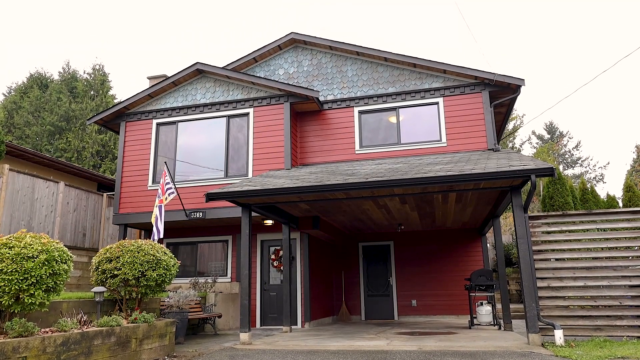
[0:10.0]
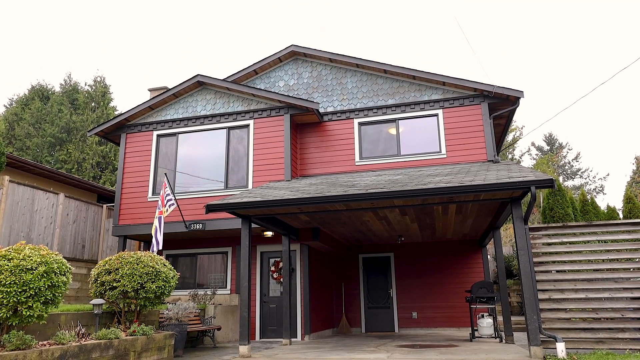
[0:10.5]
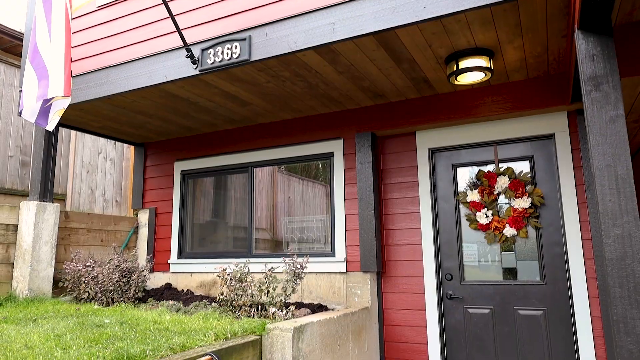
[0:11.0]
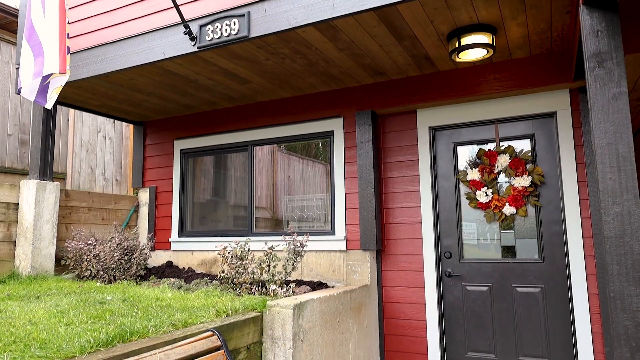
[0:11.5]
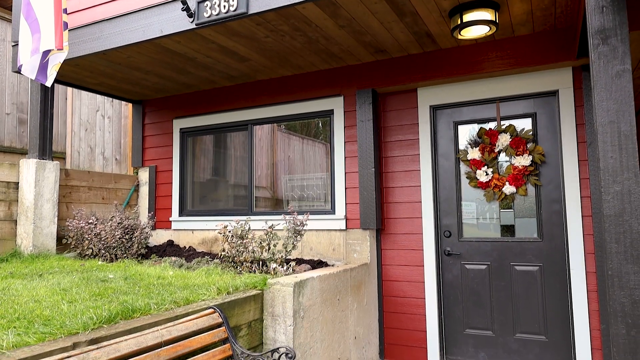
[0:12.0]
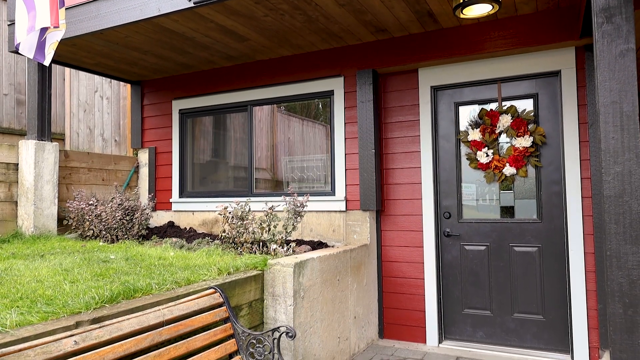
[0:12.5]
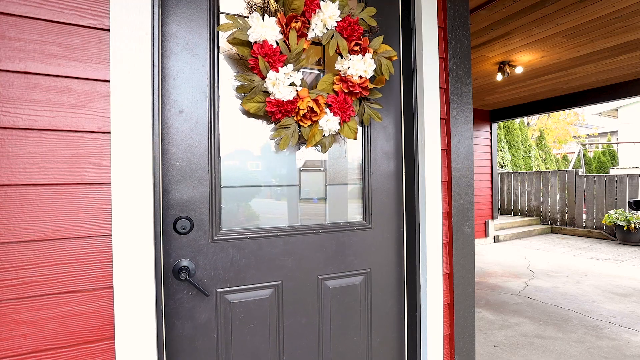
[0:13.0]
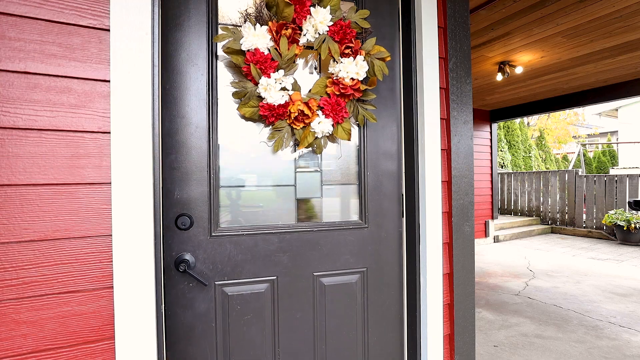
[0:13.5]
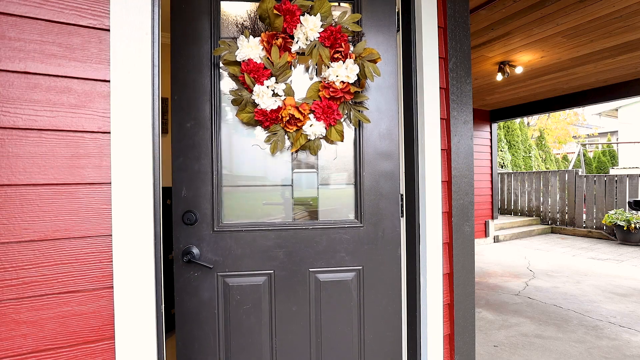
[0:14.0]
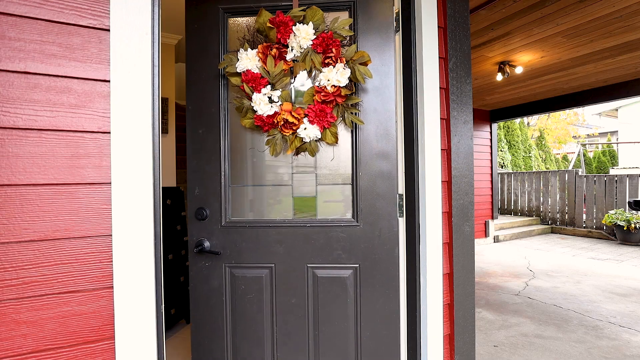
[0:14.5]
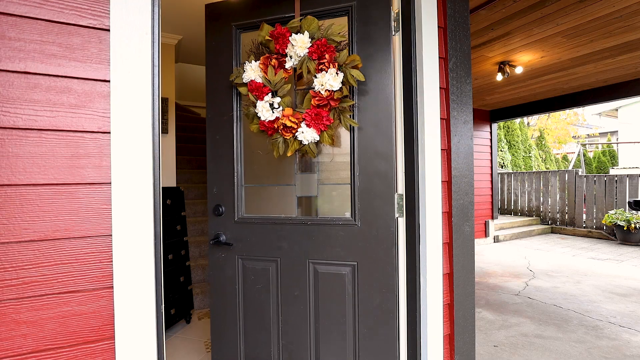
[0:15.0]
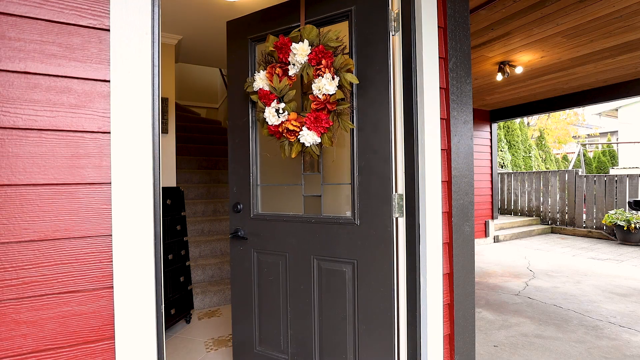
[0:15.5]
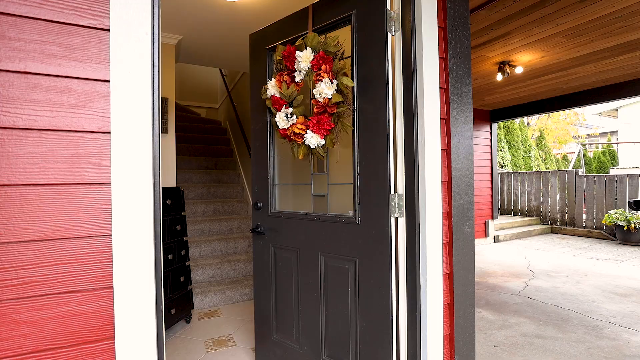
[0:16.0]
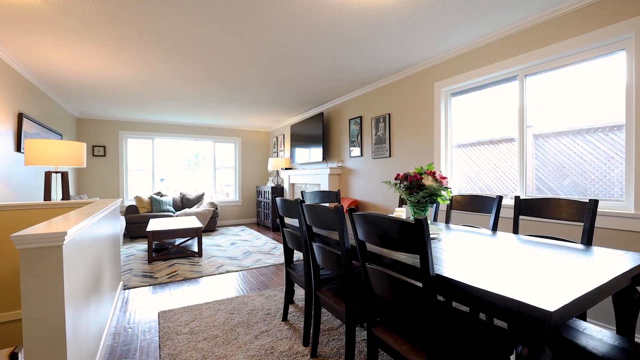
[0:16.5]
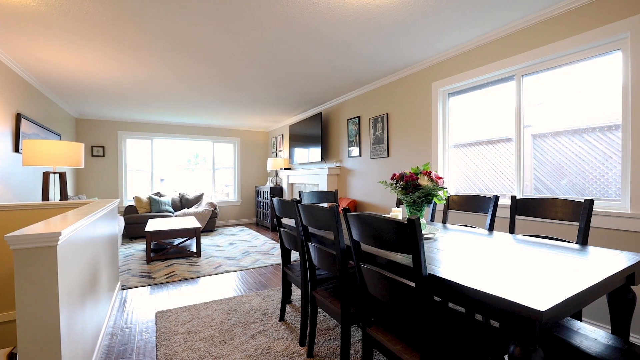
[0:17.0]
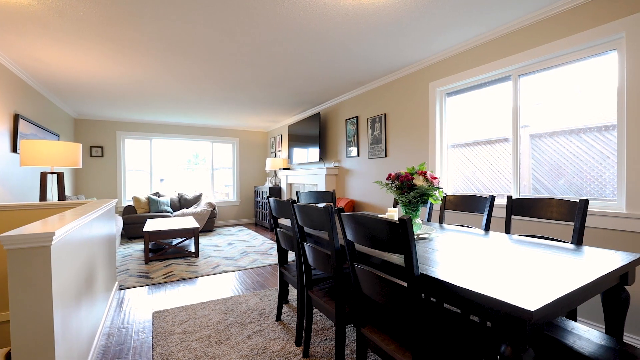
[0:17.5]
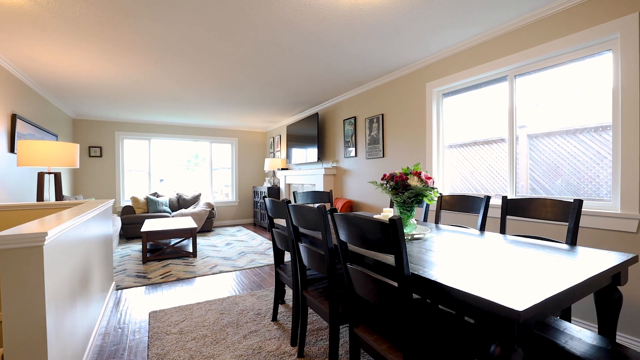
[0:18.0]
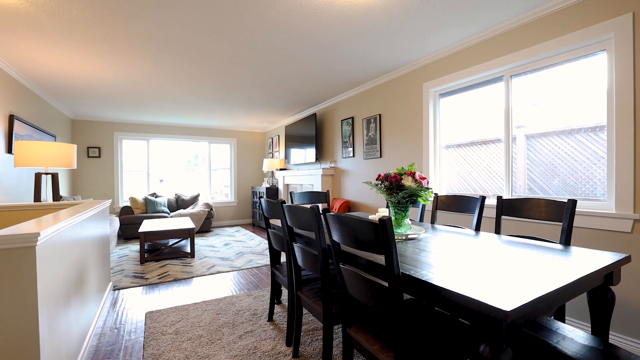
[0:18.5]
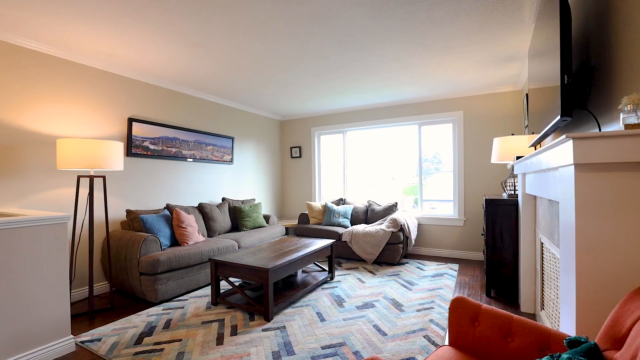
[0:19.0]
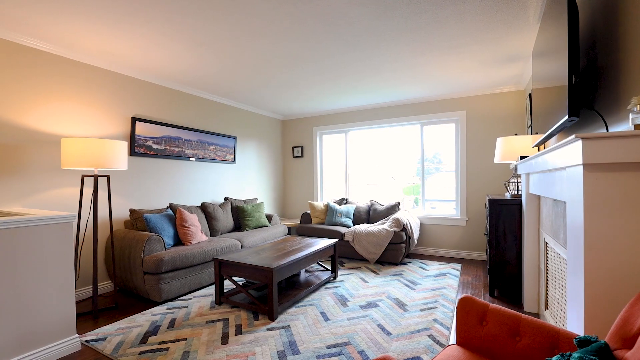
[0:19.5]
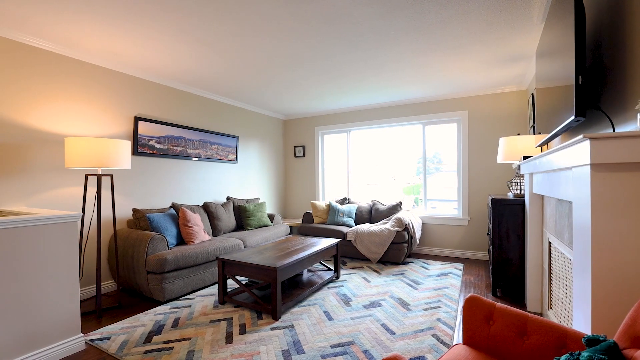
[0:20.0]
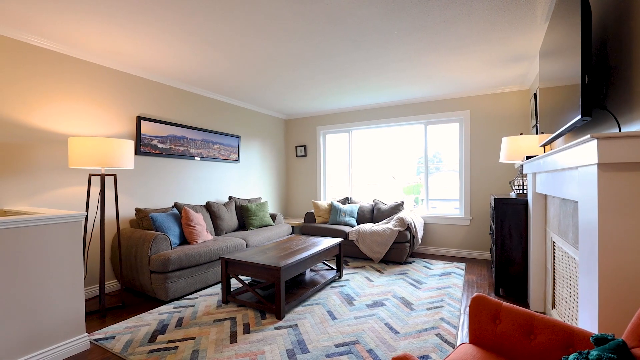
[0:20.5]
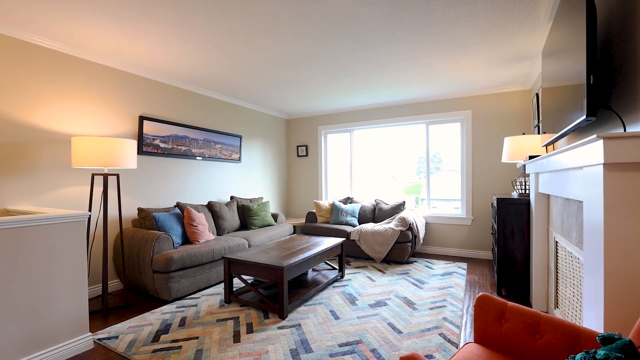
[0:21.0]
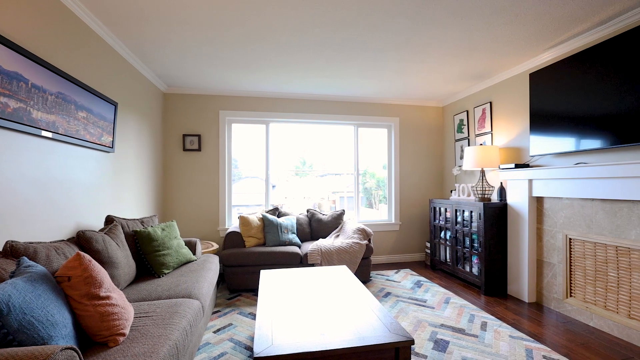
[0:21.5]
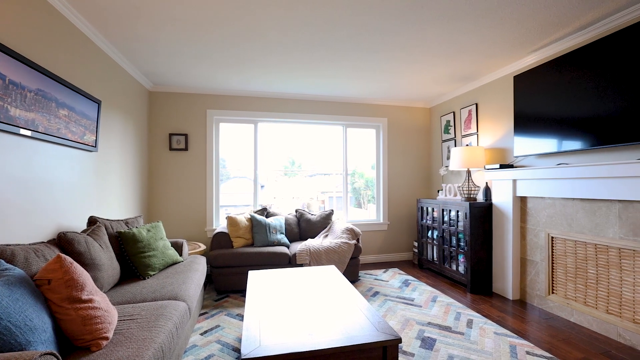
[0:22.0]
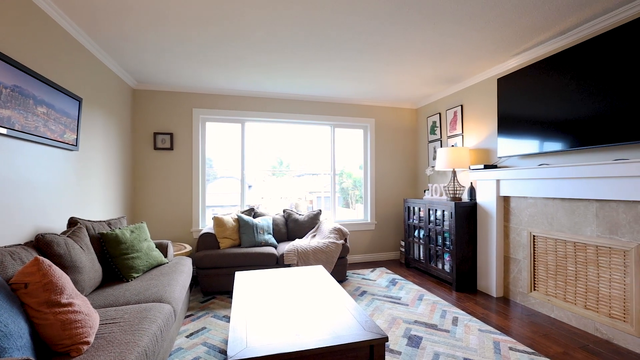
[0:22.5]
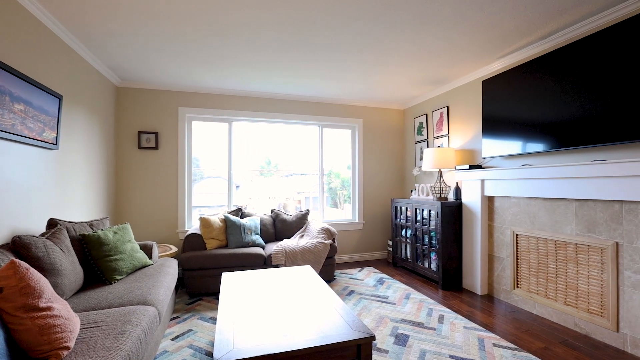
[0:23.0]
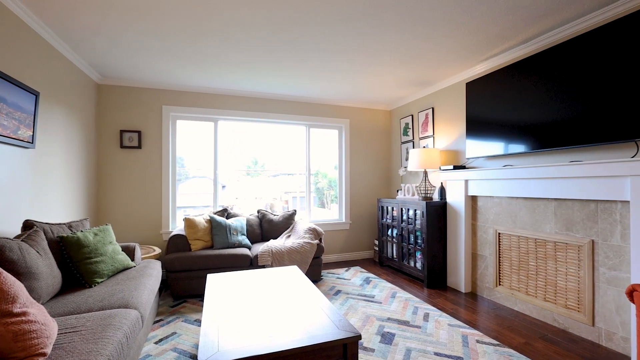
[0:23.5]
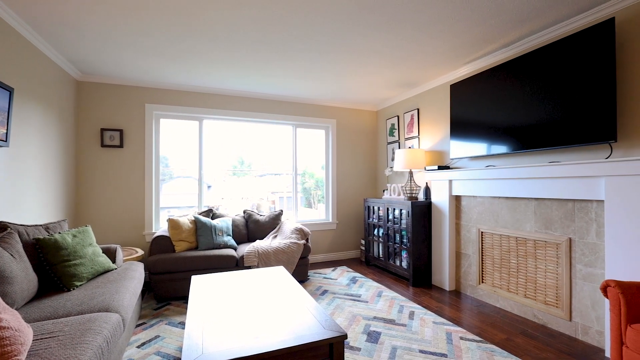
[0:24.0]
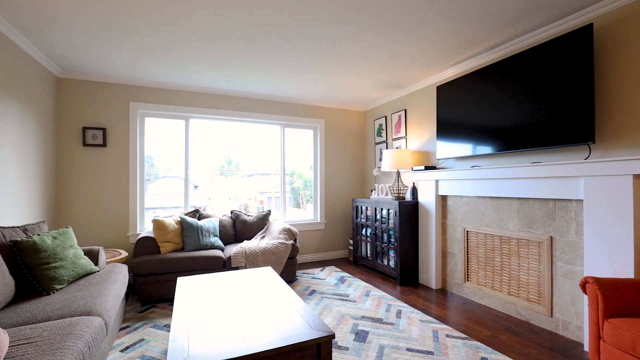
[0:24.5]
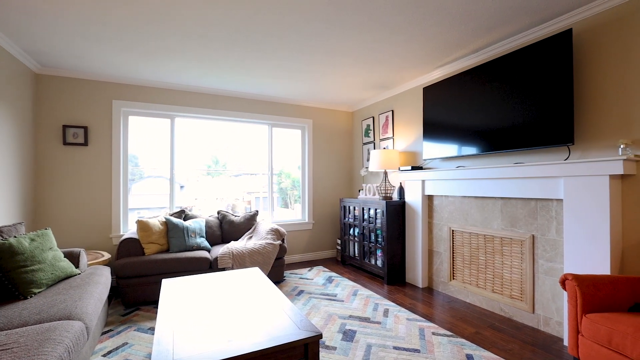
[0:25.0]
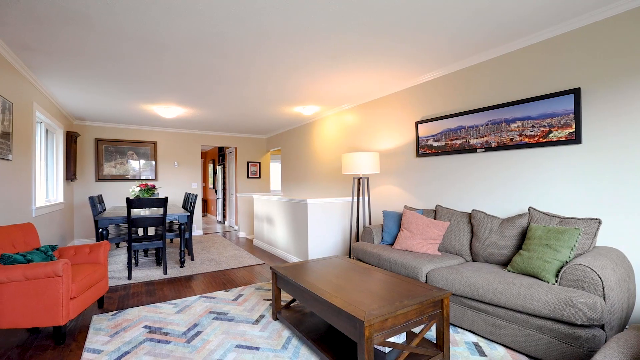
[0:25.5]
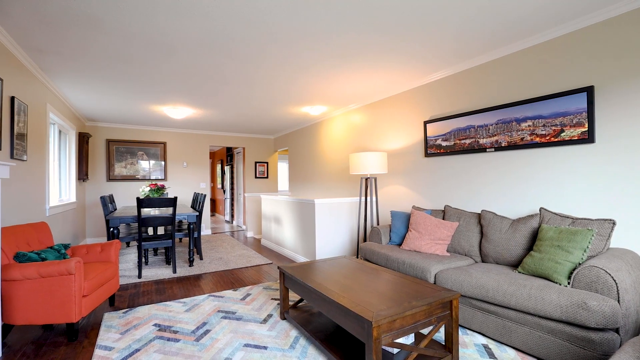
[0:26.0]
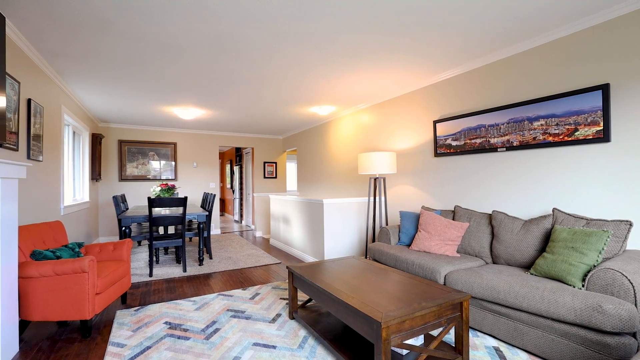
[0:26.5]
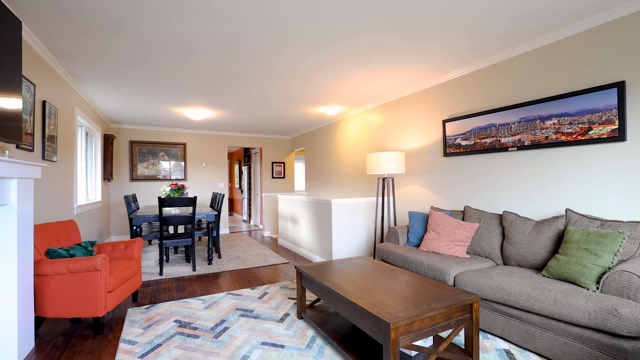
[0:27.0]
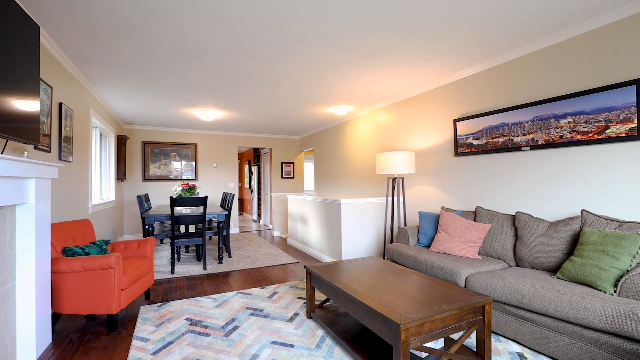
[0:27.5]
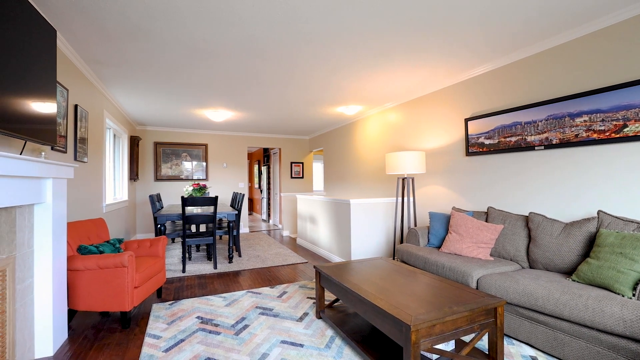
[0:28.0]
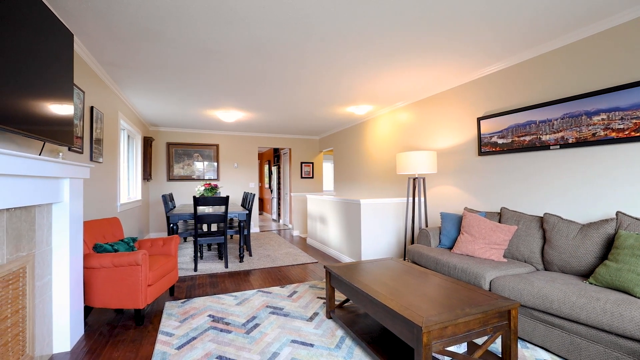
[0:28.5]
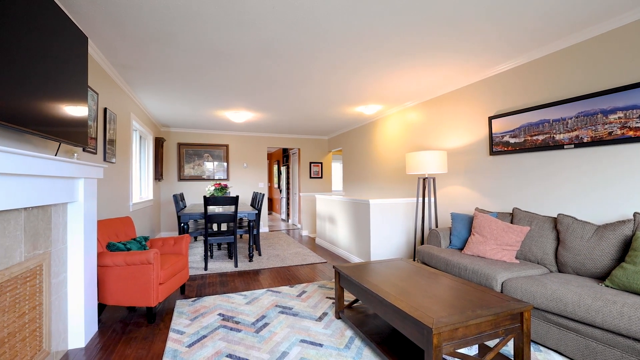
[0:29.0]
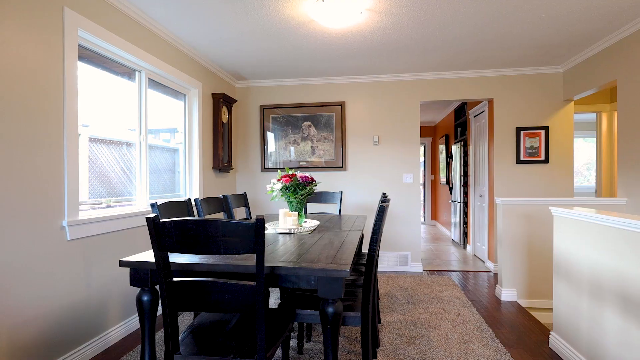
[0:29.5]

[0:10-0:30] The exterior of the home is shown a little closer, then the door opens to reveal the inside. The home is small but looks very well kept, maybe remodeled, with light-colored walls, colorful pillows and furniture, and a black dining room table. The front door is black or dark brown, and there is a red and white floral wreath on the front of the home. Inside, there are large windows without coverings, the dining room table, and a floor lamp, in kind of a traditional style. A TV is over a fireplace, and gray couches have colorful pillows on top of them. The view switches between different areas and angles of this main room, which has framed pictures on the wall. The exterior of the home has red siding with kind of gray and black trim and accents.